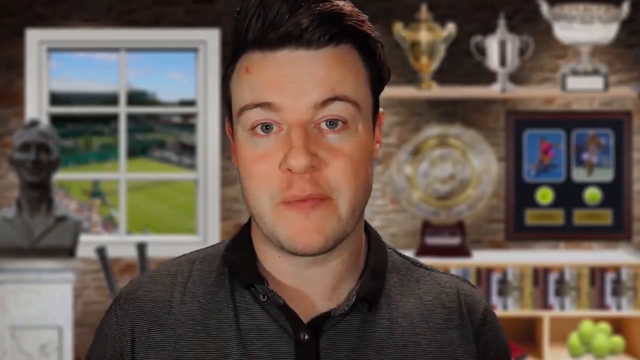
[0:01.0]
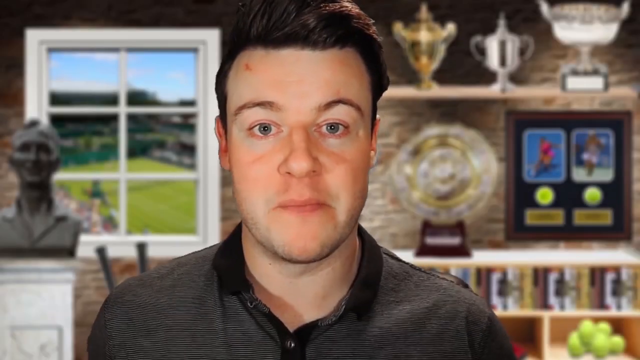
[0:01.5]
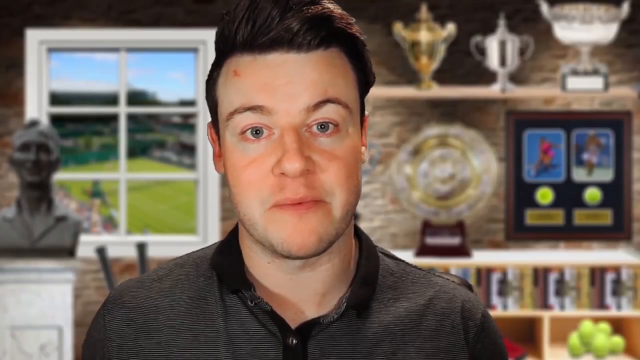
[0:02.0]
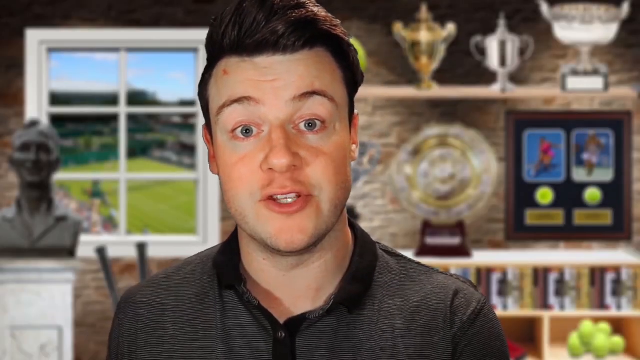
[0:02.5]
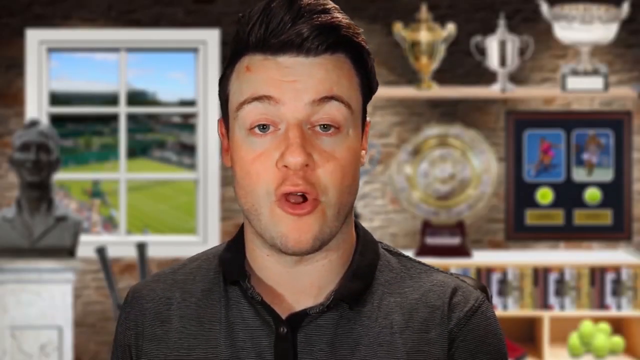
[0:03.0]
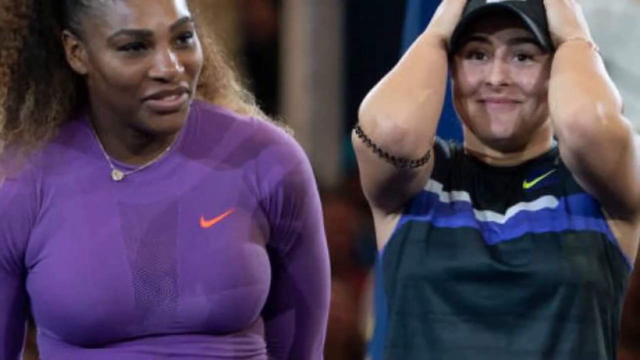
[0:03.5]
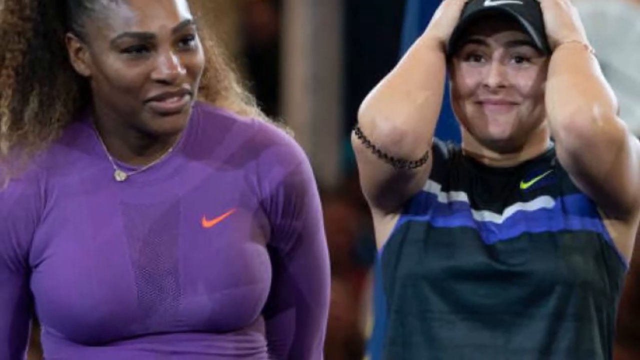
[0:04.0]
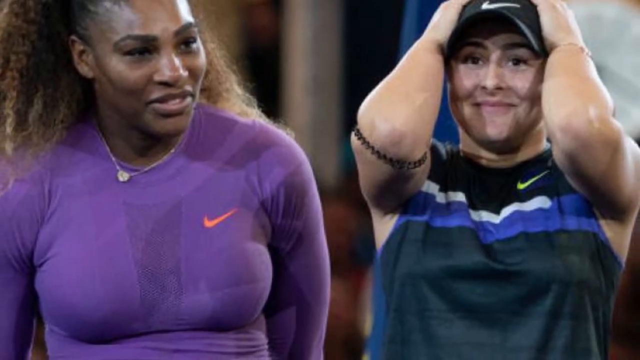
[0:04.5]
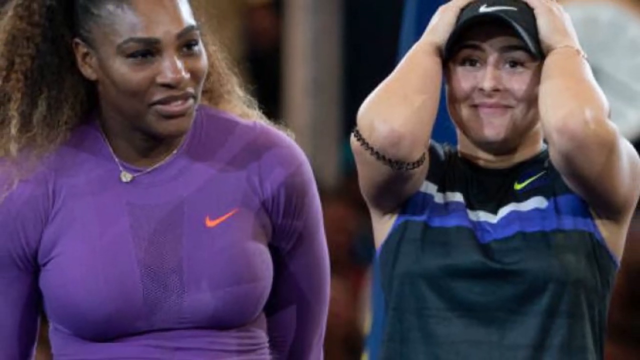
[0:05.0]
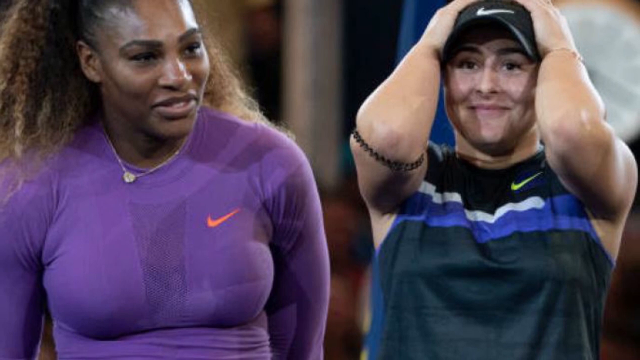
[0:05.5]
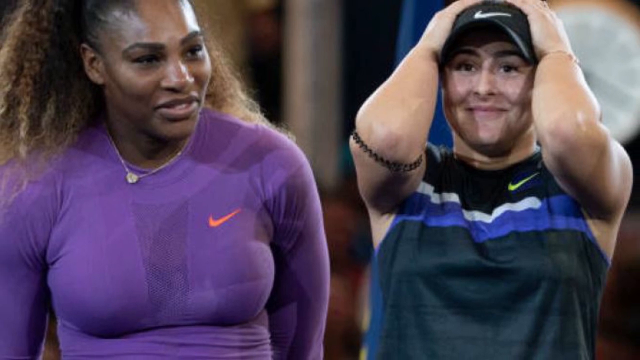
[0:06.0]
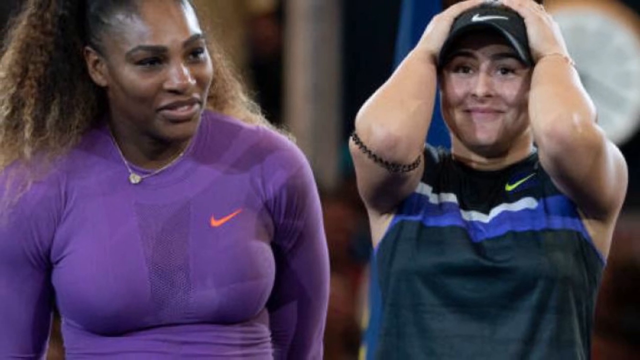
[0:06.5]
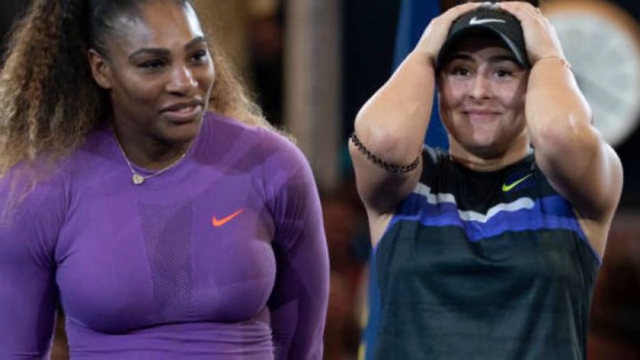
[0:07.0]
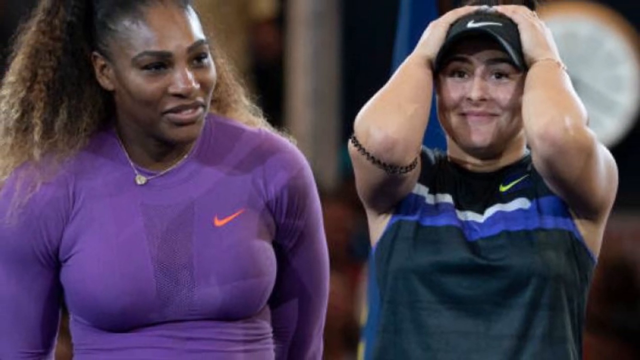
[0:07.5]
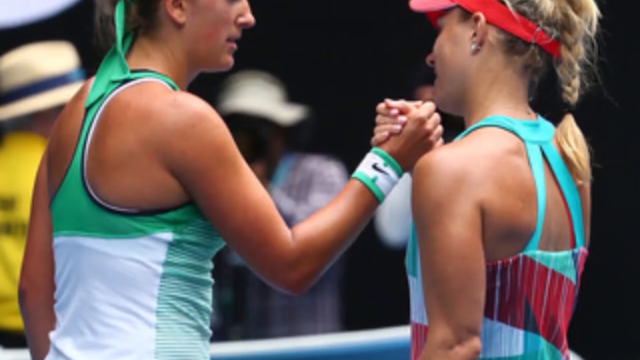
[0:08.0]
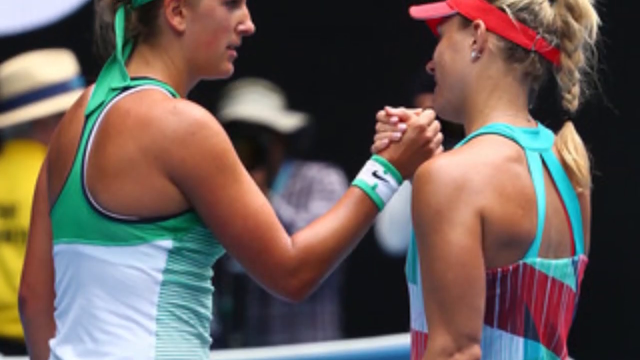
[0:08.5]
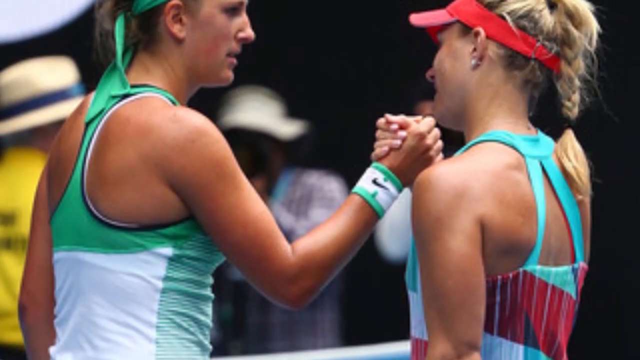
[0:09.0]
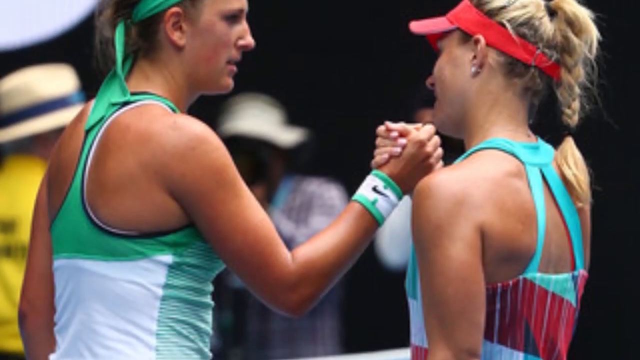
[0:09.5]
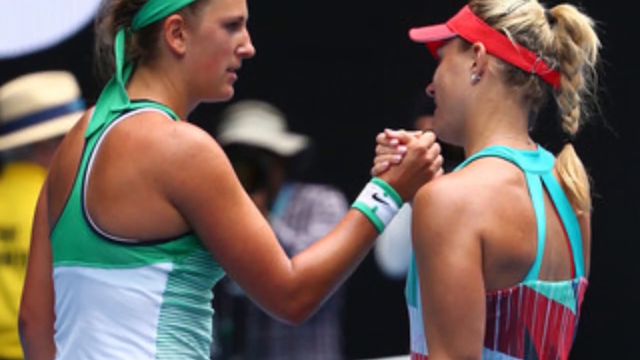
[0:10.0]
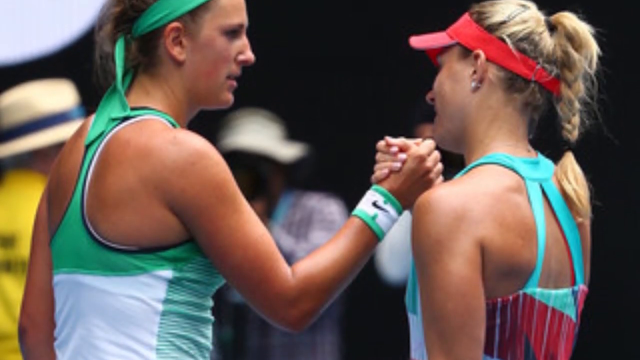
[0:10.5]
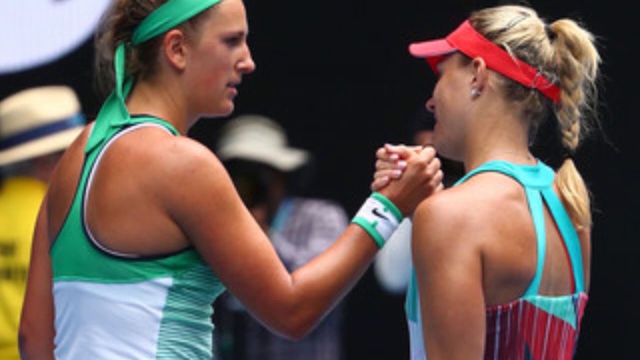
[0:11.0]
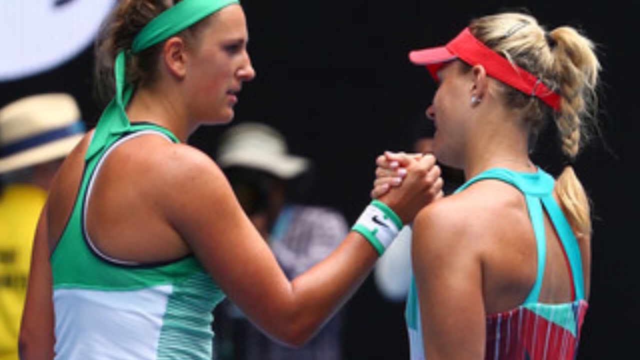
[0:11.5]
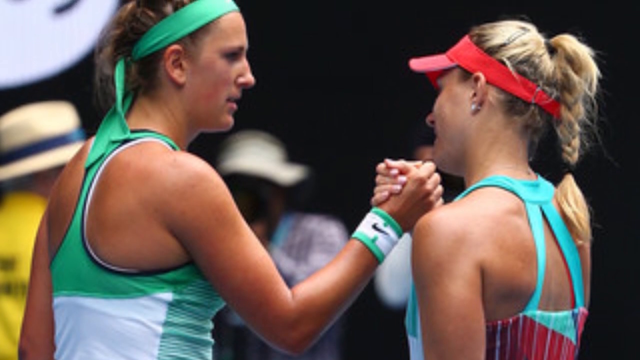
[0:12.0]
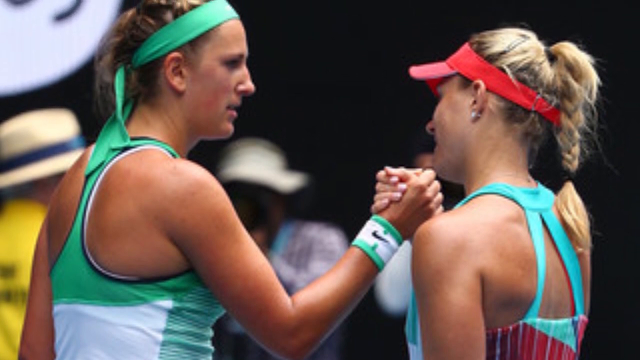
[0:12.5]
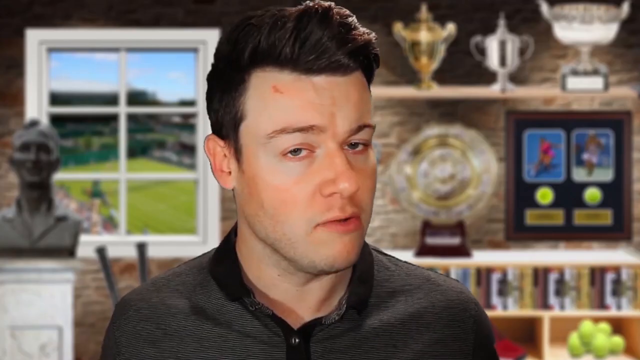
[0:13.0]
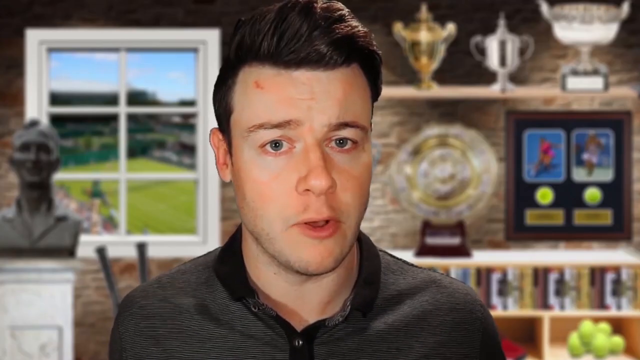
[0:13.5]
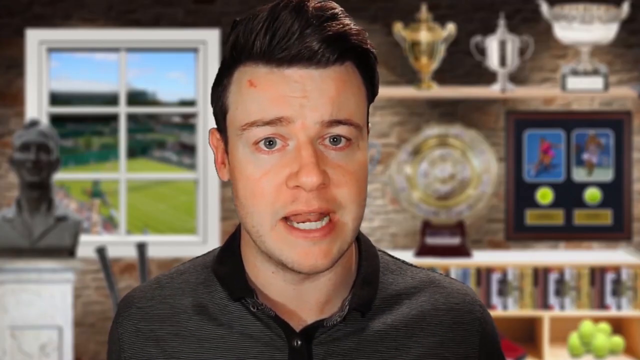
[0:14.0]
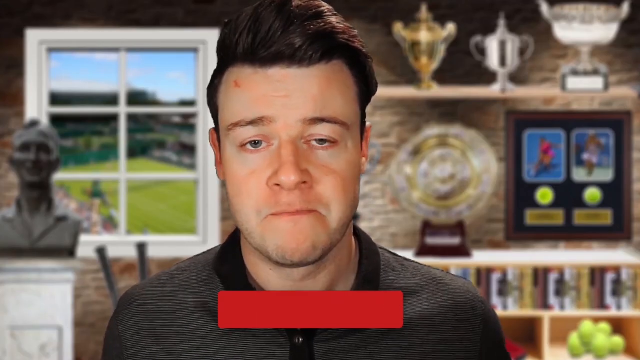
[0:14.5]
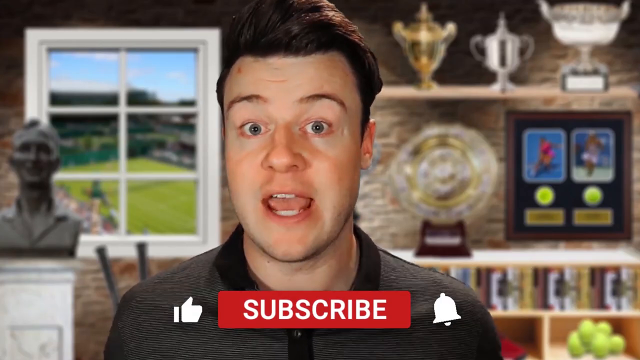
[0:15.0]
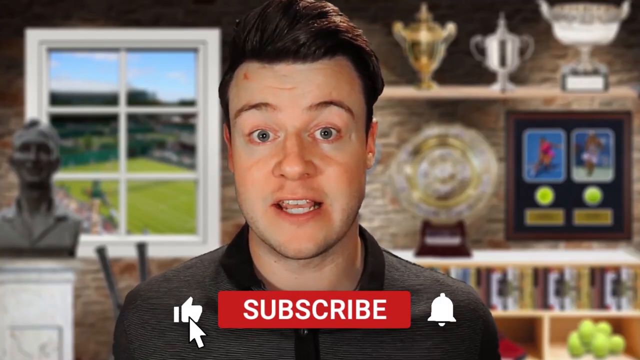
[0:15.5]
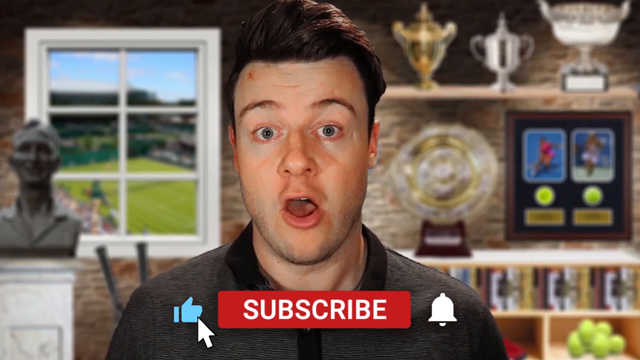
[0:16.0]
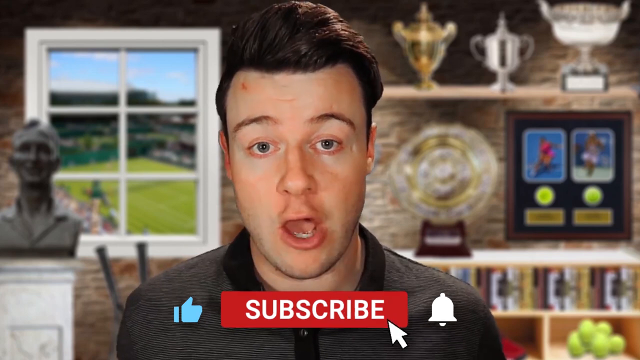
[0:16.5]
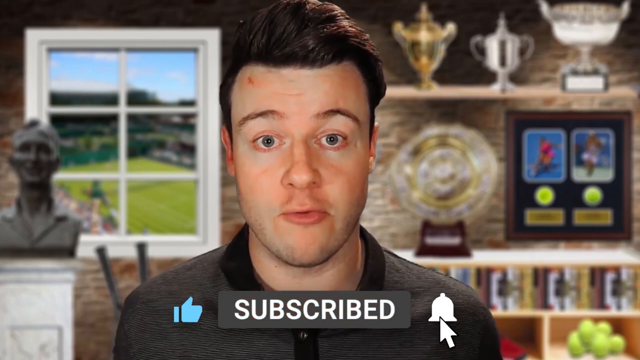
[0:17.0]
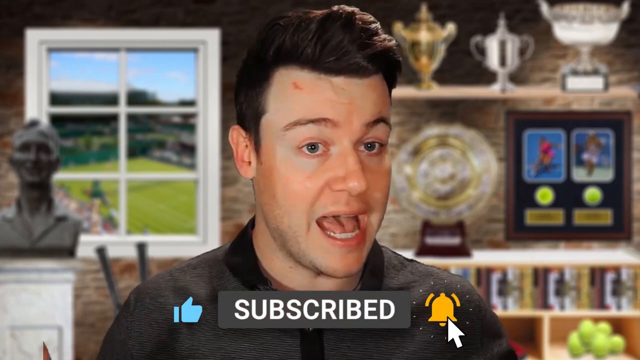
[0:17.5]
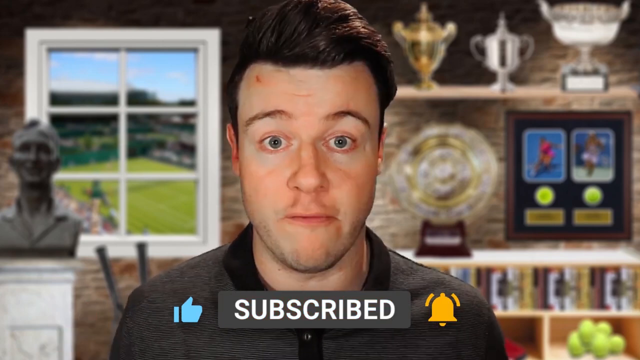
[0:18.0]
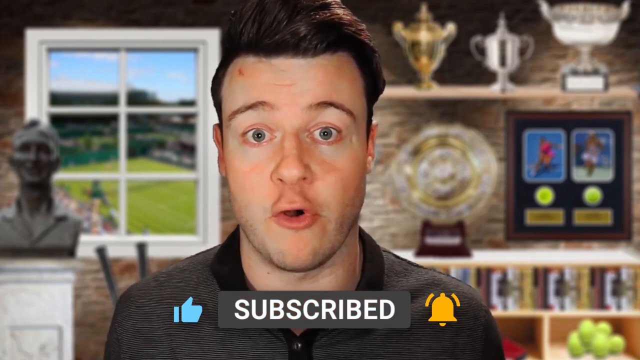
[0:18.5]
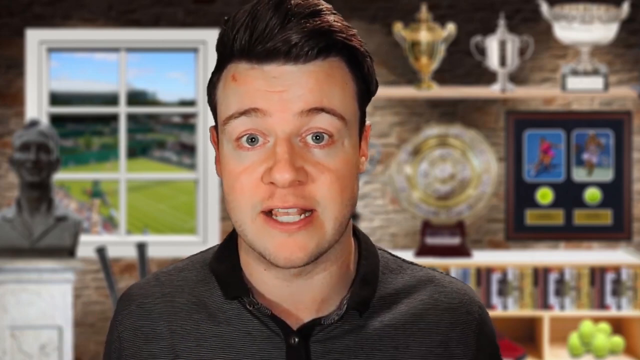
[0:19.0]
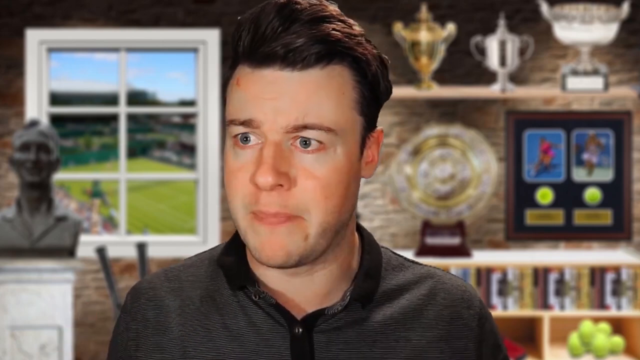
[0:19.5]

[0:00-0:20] A black screen slowly gives way to an image: a video of a young man standing in a room with stone walls. To his left is a bust of somebody, and there is a window with what looks like an artificial image of a meadow and some mountains. On the right side, behind him, are shelves with trophies on the top and second rows and what looks like some kind of sports memorabilia on the third row. The man is white, has a red mole on his right temple, and wears what looks like a sweater over a shirt. He faces the camera and looks directly at it as he speaks, raising his eyebrows as though to emphasize what he is saying. The image shifts to a still shot of two players' pictures side by side. The one on the left looks like Venus Williams; the one on the right looks like another, unidentified tennis player, a white woman clasping her head between her hands and wearing a black cap. The image zooms outwards as though the camera is moving away from the pictures of the two women, and after a few seconds it changes to a picture of two women facing each other with their right hands clasped up in a high handshake. Behind them are two blurred-out people in the background, both wearing straw hats. The woman on the left wears green and has a green bandana on; the woman on the right wears more of an aqua and has on a red cap. The image shifts back to the man, still in the same room. He shakes his head once for emphasis, continues talking, and raises his eyebrows. As he does, a subscribe indicator with a bell and a thumbs-up symbol comes up at the bottom of the screen and stays there. A cursor clicks on the thumbs-up symbol, then on the word subscribe, and then on the bell, while the man continues to speak emphatically, moving his head around quite a bit.